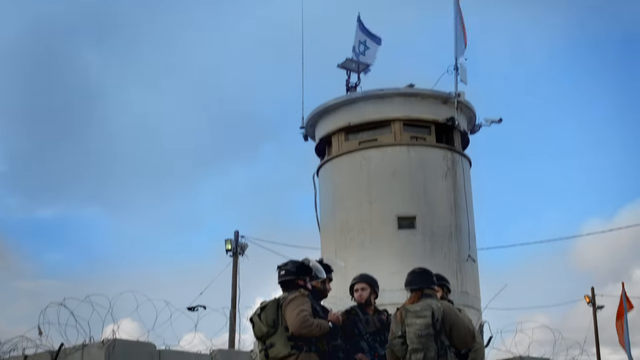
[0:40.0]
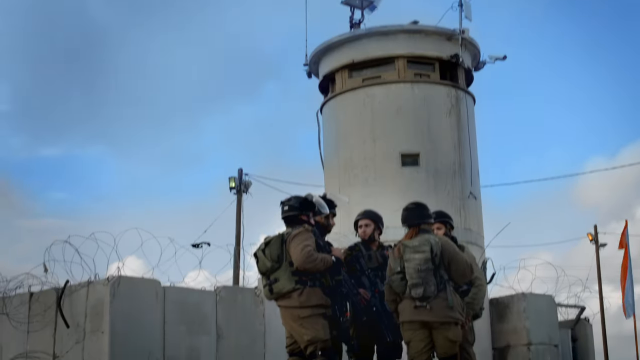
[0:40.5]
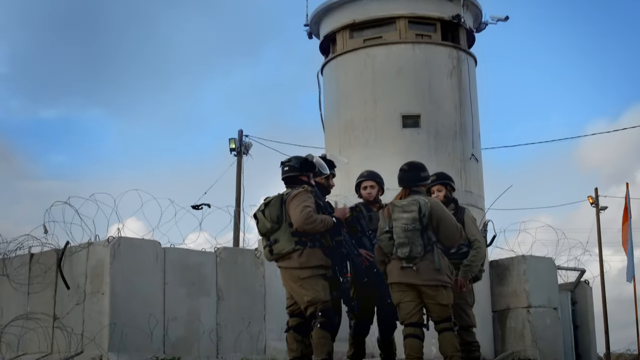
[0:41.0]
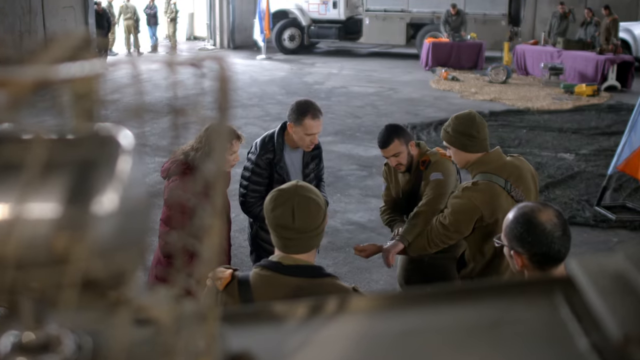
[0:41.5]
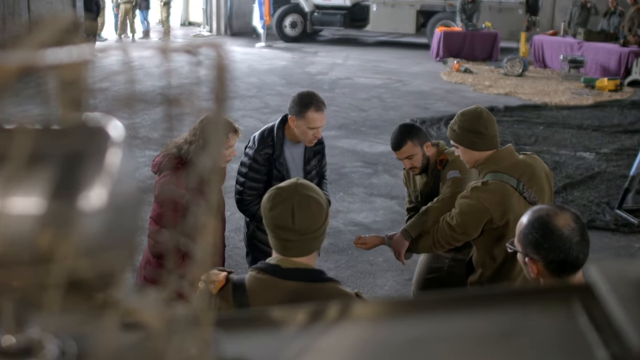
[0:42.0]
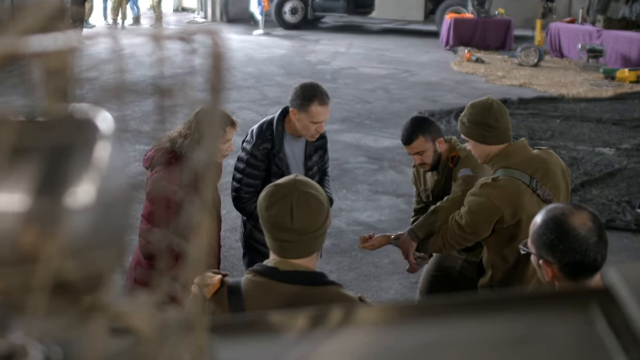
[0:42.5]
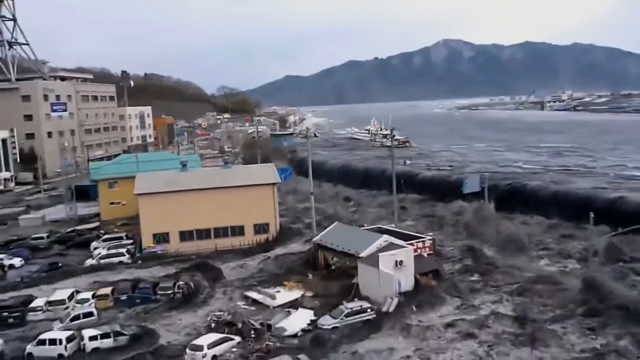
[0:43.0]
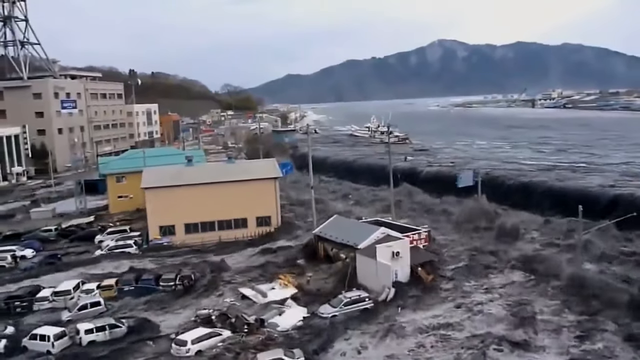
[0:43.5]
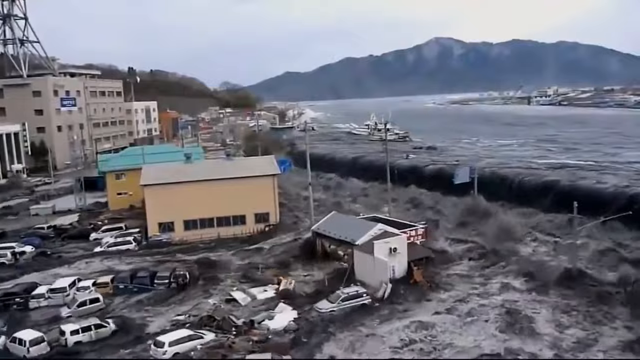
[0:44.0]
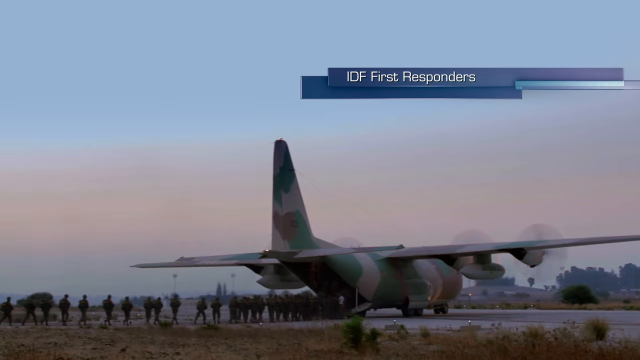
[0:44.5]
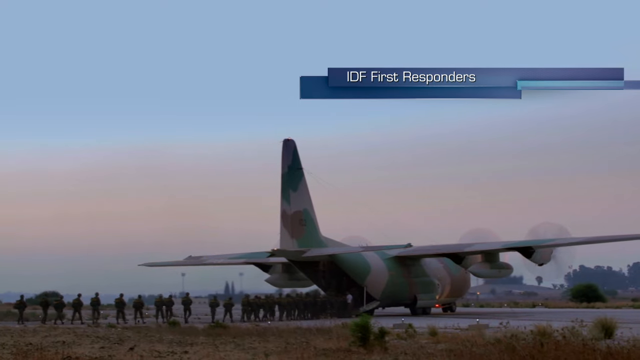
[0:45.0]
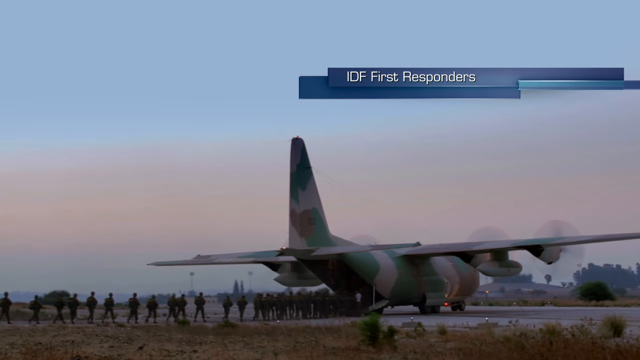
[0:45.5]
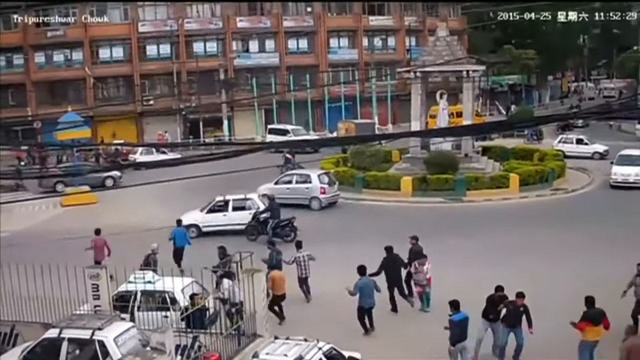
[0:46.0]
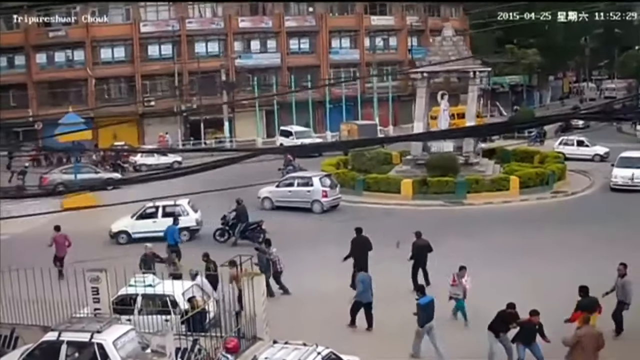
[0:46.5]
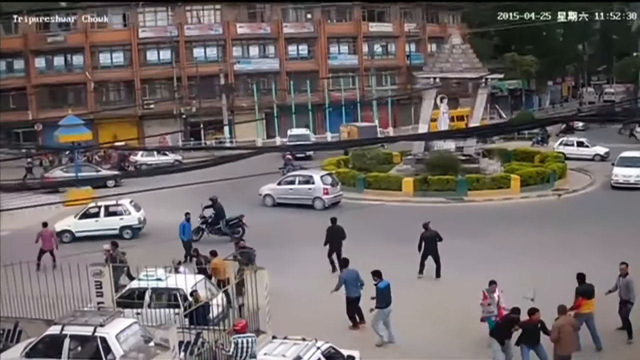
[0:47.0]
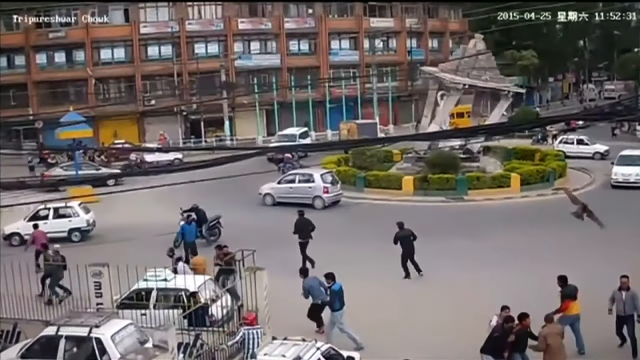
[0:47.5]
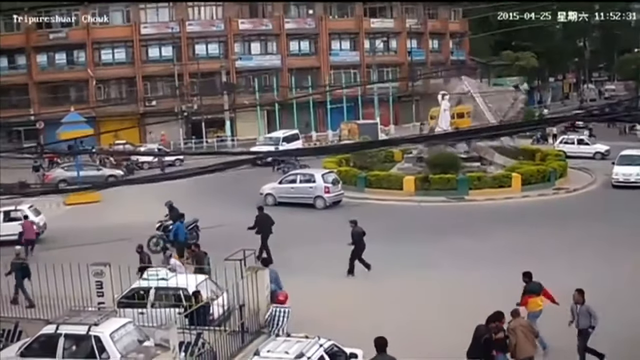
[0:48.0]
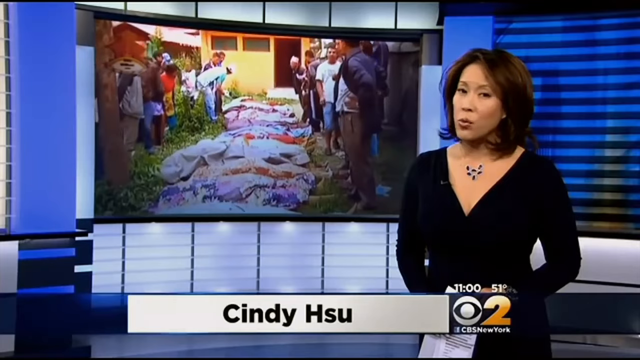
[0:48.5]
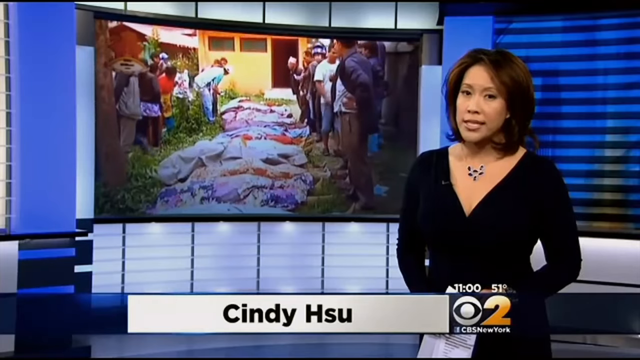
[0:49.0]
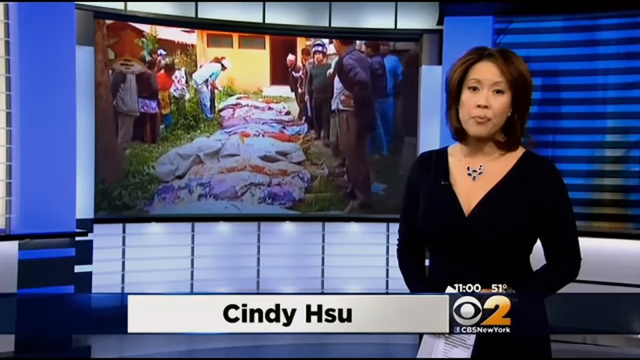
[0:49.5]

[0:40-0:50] A white, circular-looking tower structure flies a blue and white Israeli flag from its top, with military personnel standing on the ground in front of it. The scene switches to what looks like the inside of a hangar, where several people stand around almost in a circle, talking. Next, an area is flooding: water pours over something like a small seawall and rushes in, covering the nearby houses. A camouflage-painted airplane appears kind of to the right of the screen, and above it on the right-hand side white lettering reads "IDF first responders." A city scene follows with a bunch of cars driving around, a building in the background and people running around in the foreground, and everything shakes as if there is an earthquake. A pavilion-like structure, kind of in the center of the screen and slightly off to the right, collapses, crumbling and falling to the side.